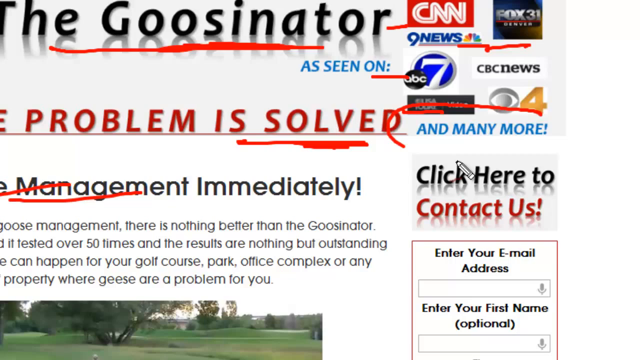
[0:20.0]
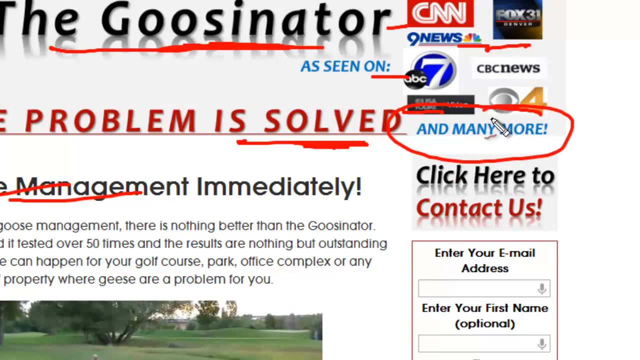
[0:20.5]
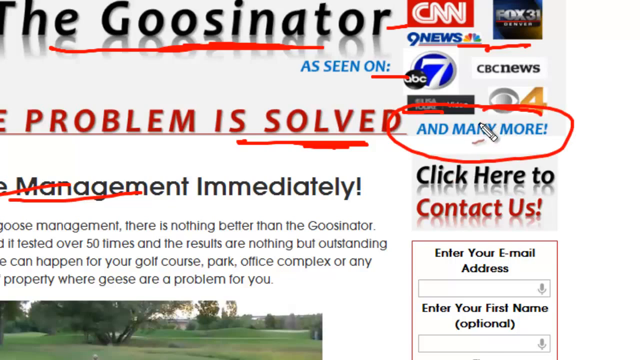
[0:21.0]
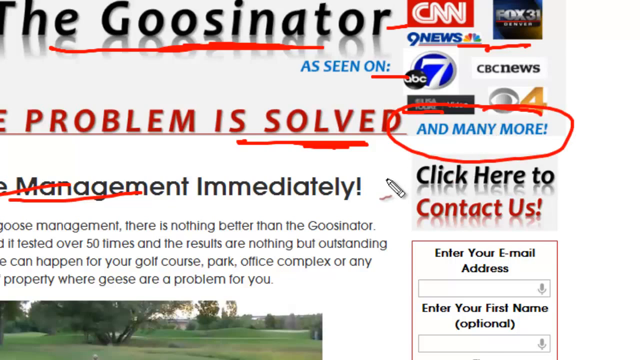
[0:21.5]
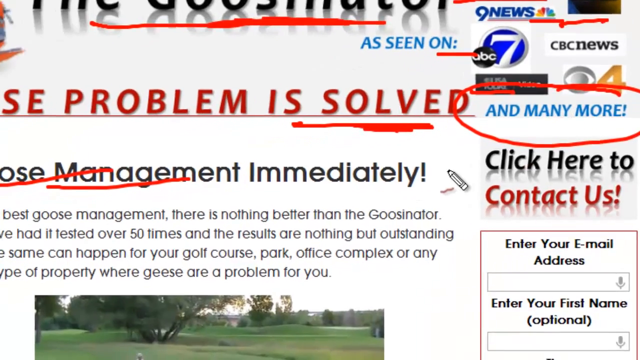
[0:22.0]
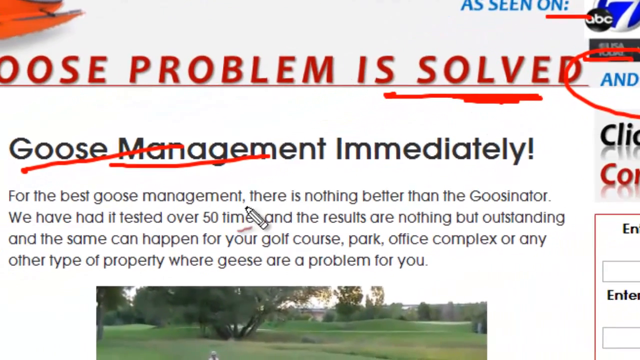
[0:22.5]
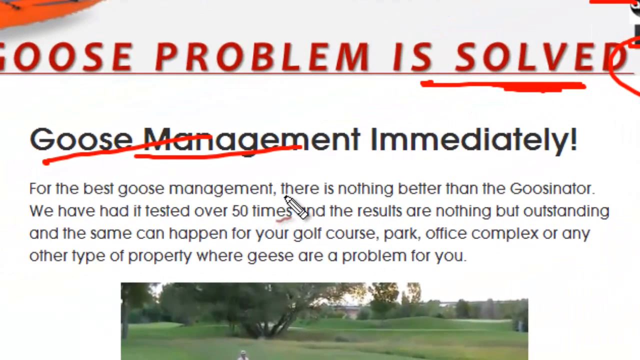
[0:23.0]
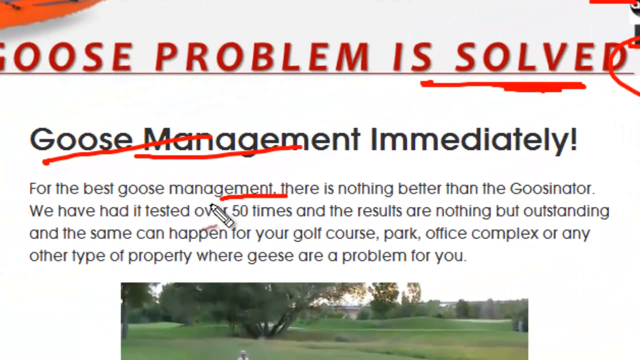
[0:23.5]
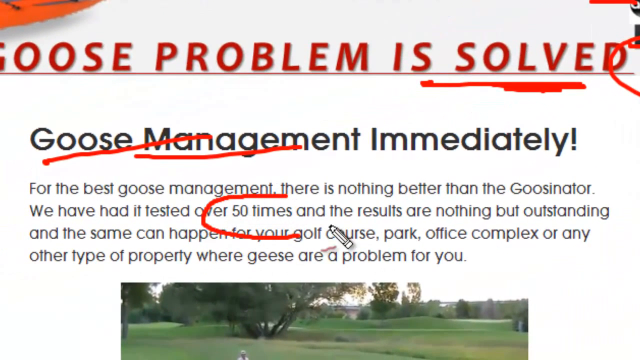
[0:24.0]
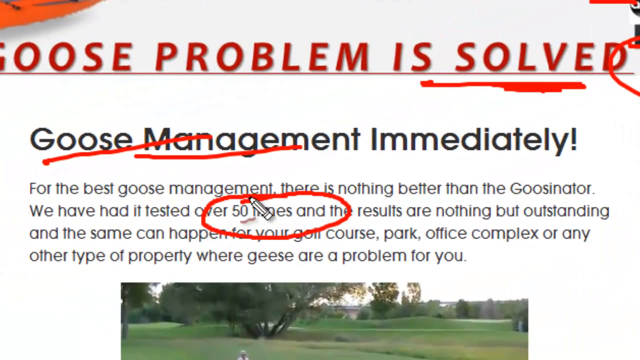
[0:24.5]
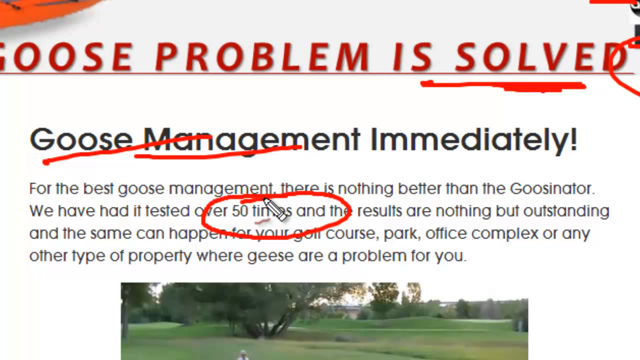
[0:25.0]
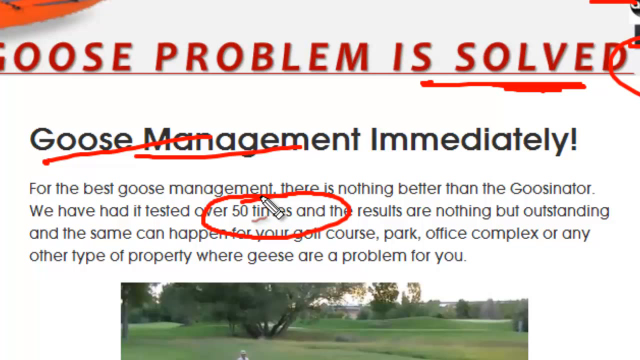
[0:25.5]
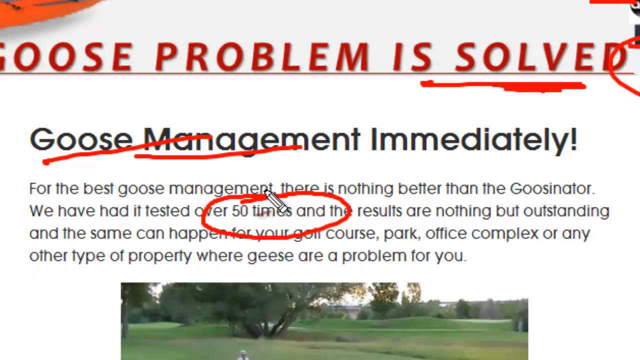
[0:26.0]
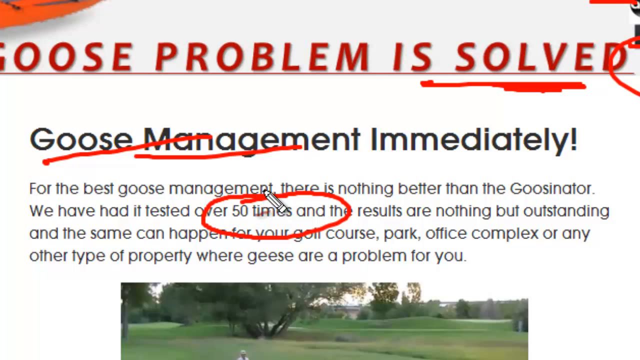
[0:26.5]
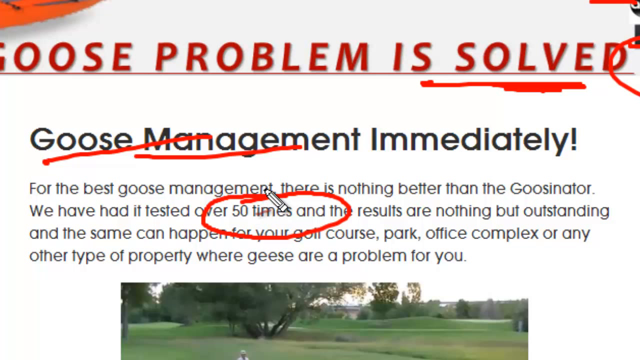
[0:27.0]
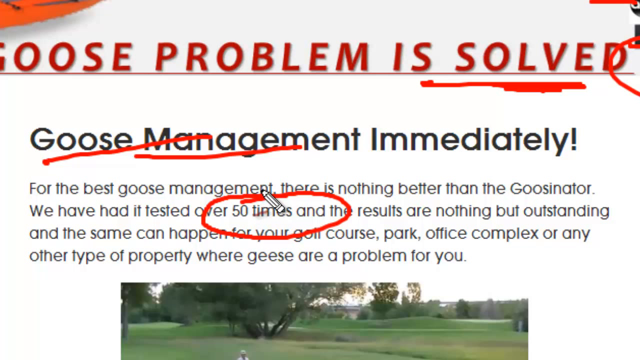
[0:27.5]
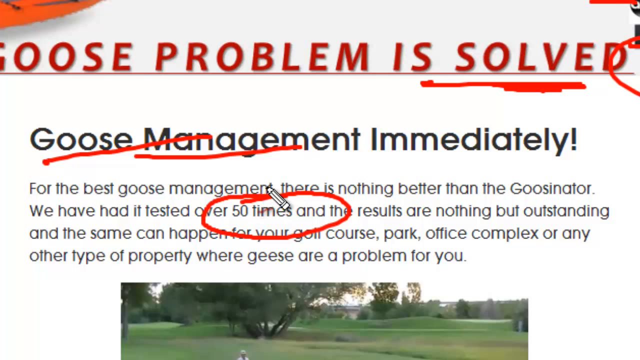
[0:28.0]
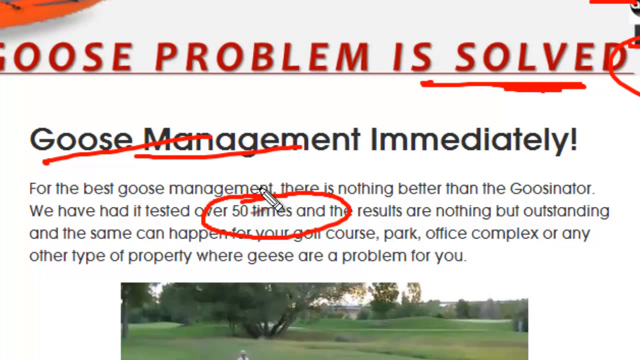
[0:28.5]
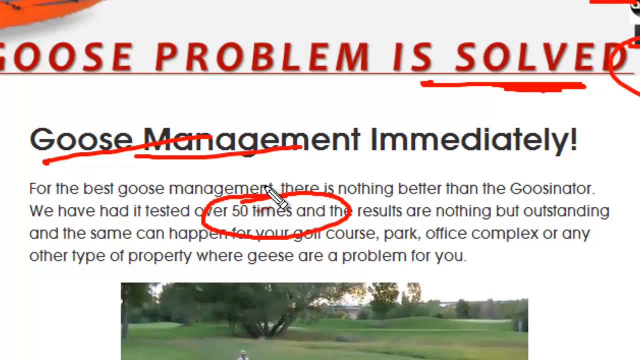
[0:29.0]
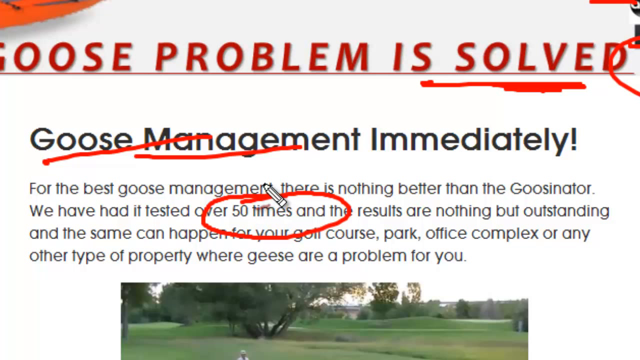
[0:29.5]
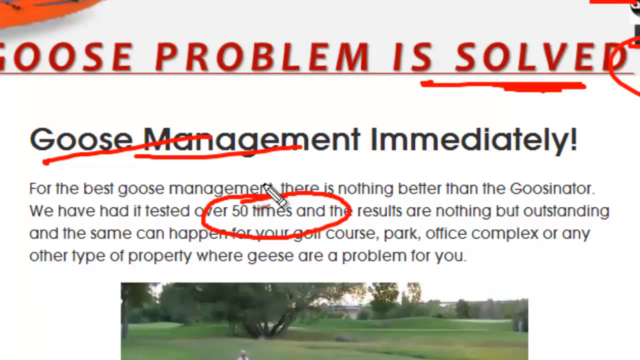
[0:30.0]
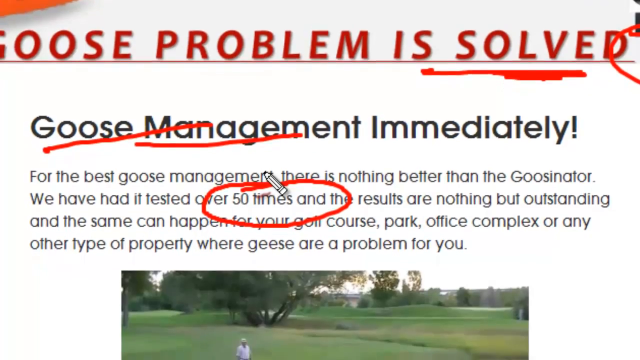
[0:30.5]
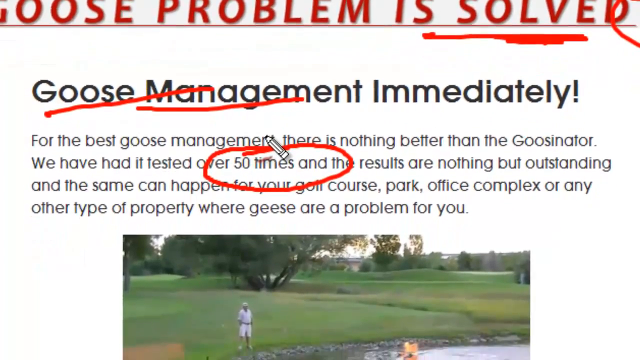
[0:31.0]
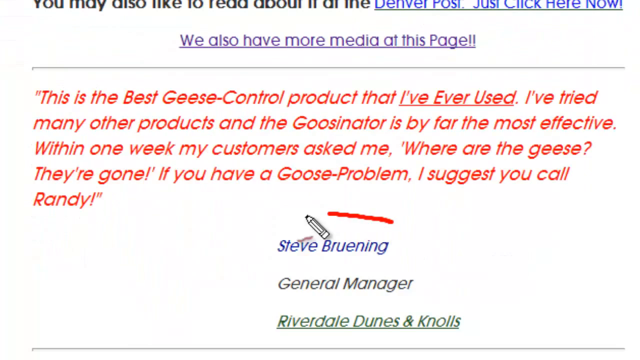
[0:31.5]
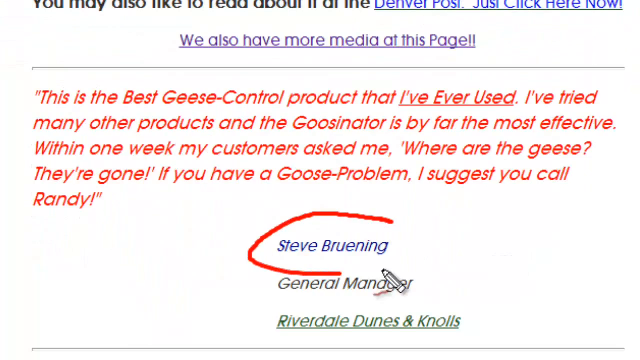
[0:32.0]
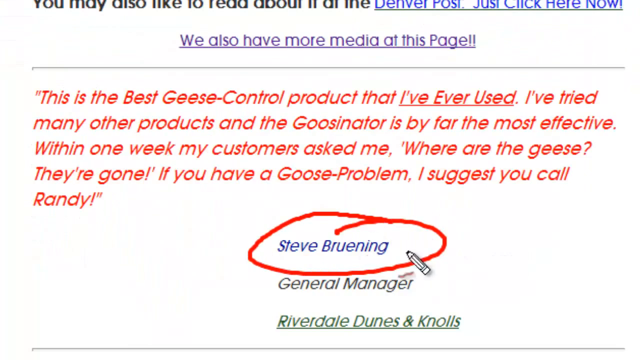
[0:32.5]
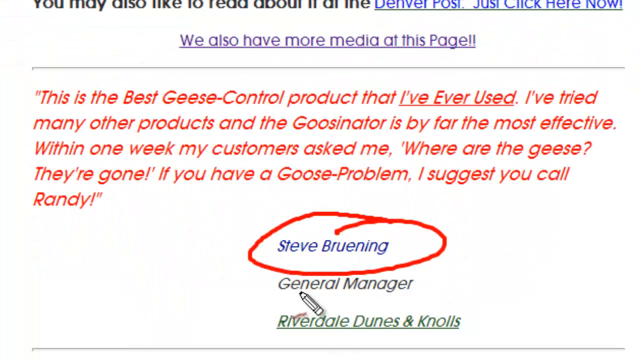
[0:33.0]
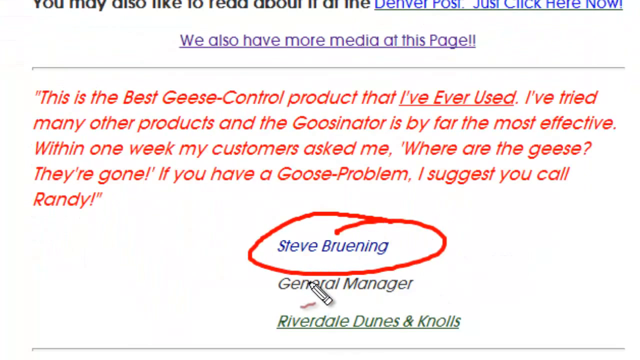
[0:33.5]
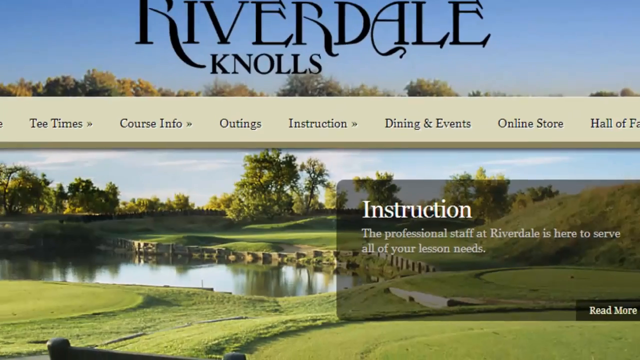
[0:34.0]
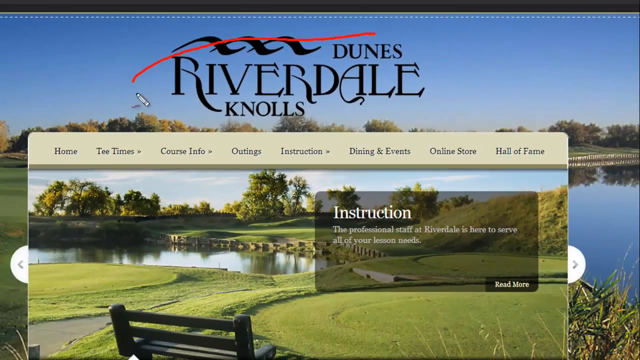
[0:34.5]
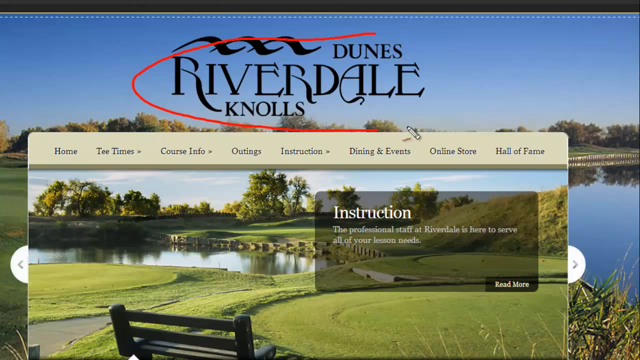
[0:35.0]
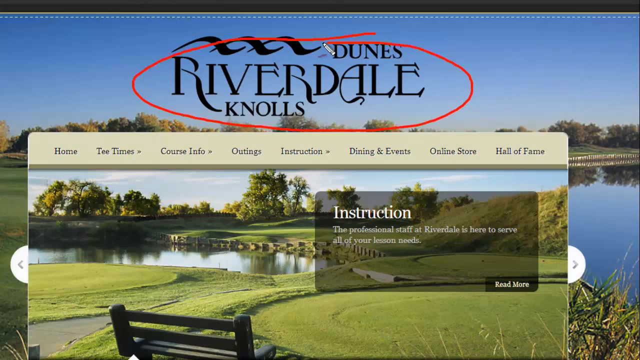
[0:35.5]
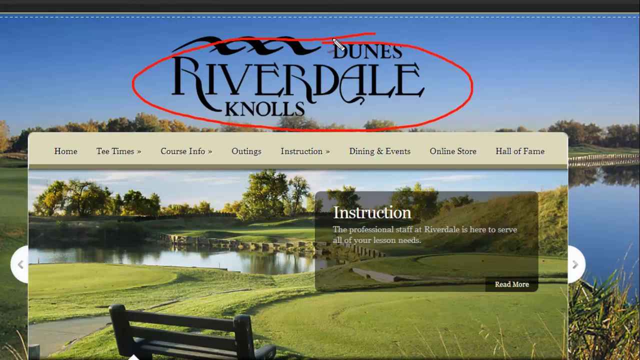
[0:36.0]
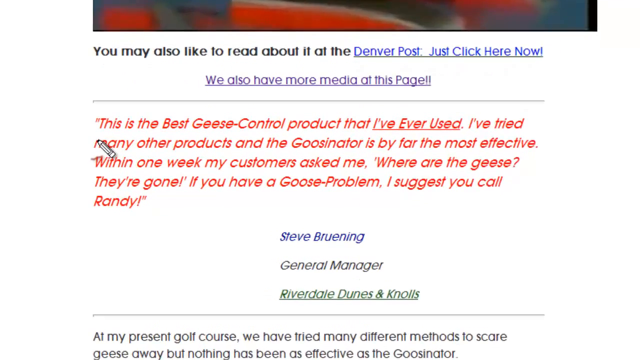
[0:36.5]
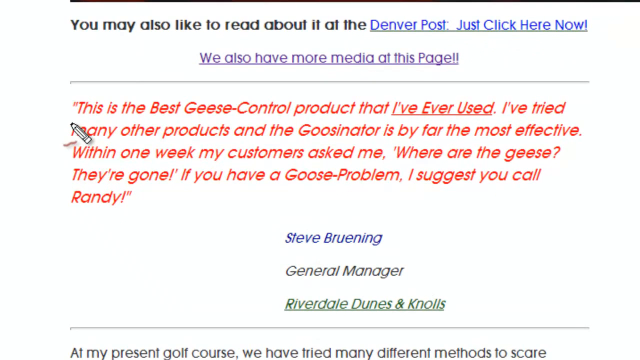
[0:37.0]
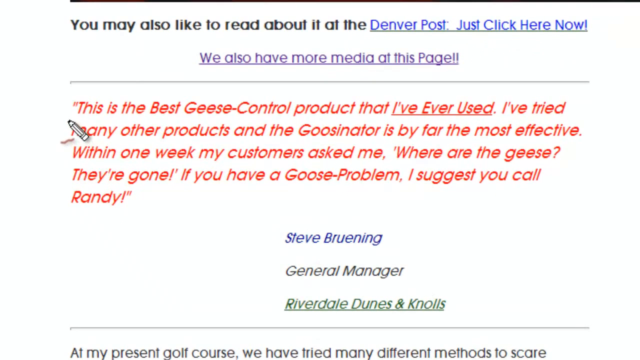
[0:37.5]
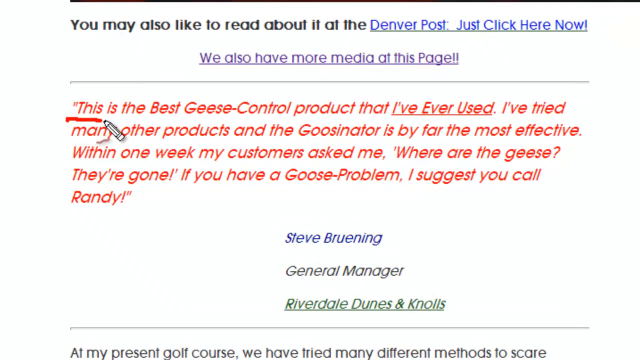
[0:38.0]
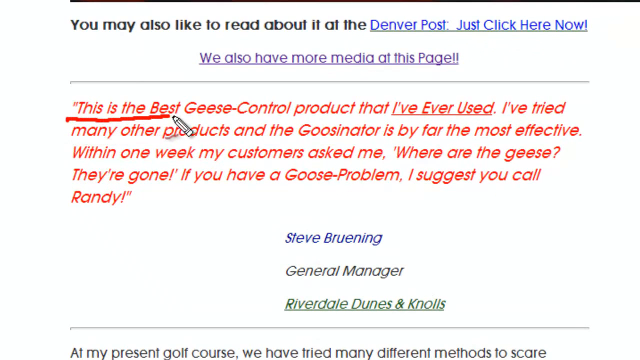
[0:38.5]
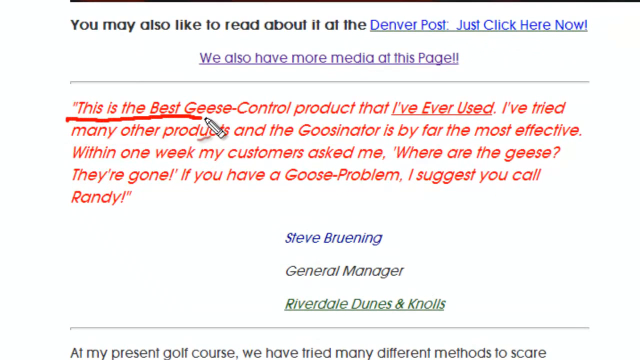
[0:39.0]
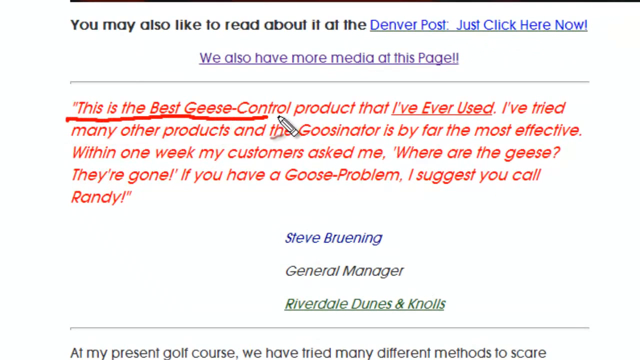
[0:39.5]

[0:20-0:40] A close shot shows a web page with a lot of text, and a cursor with a pen icon highlights text on the page with red lines. The pen highlights the text "and many more" under a section with a cluster of TV channel logos. The video pans to the left side of the page to focus on what looks like an article titled "Goose Management Immediately!" The pen has highlighted part of this title and circles part of the article body around the text "50 times and". The video scrolls down to partially reveal the article's featured image, then transitions to what is possibly a lower part of the article, where the pen highlights the name "Steve Bruening" in red. The video then scrolls to what is possibly the homepage of the website for 'Dunes Riverdale Knolls', before going back to the earlier page to highlight more text.